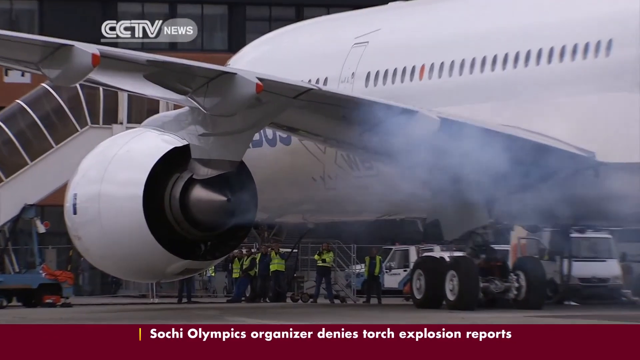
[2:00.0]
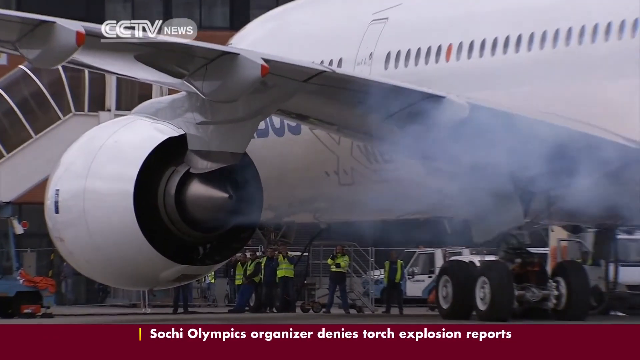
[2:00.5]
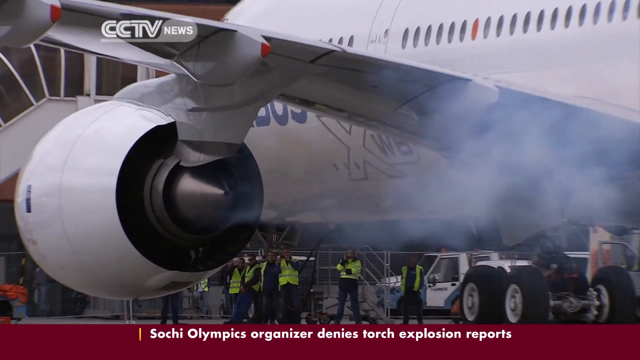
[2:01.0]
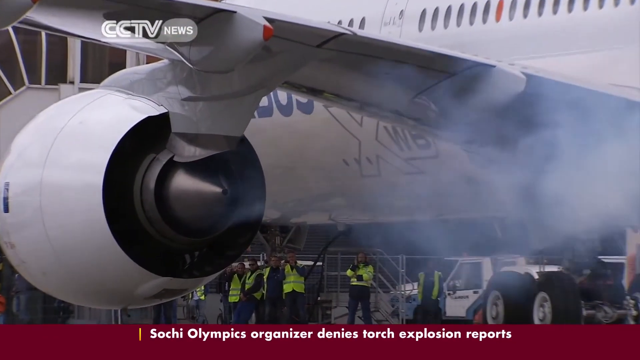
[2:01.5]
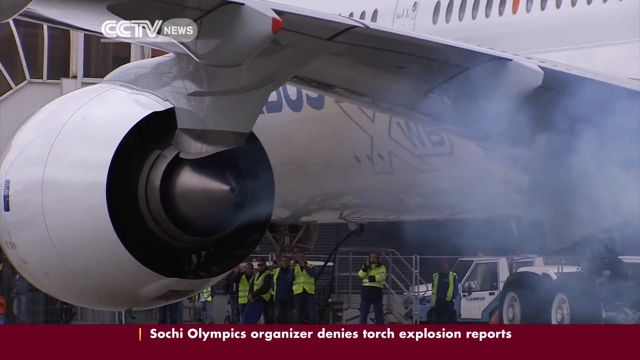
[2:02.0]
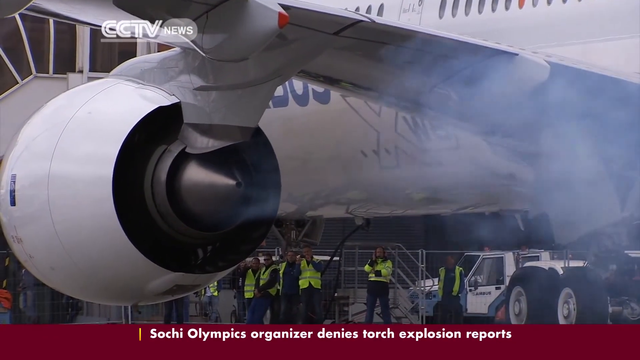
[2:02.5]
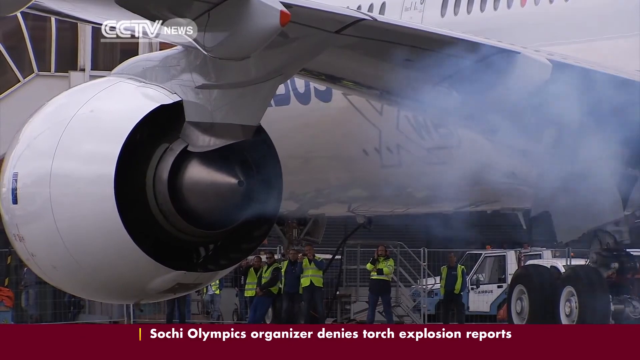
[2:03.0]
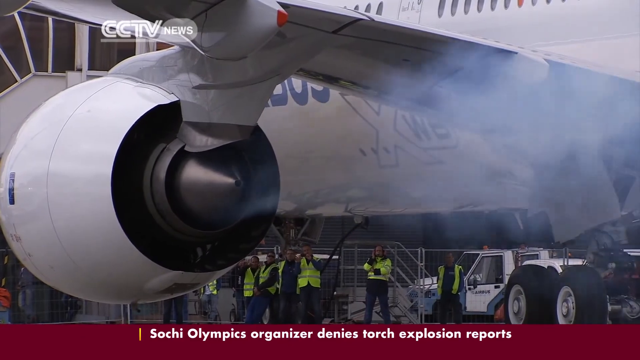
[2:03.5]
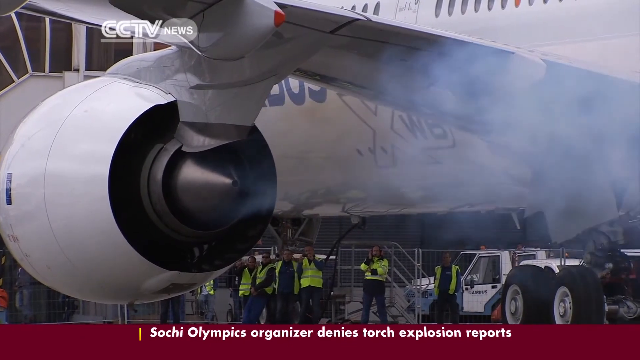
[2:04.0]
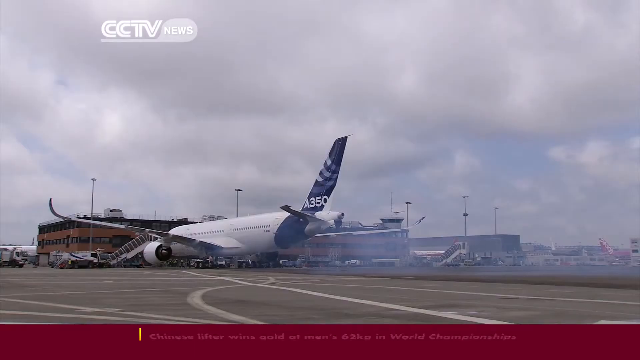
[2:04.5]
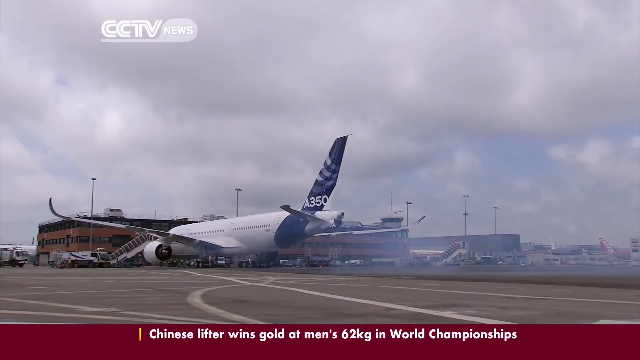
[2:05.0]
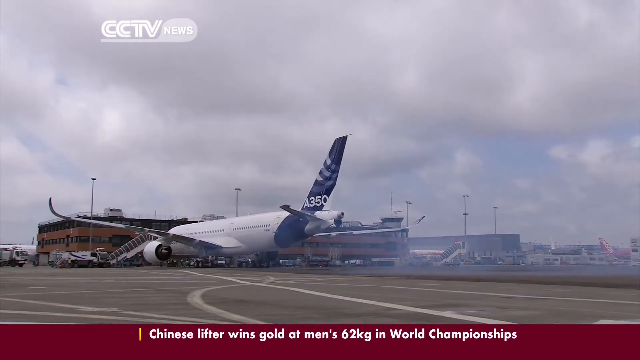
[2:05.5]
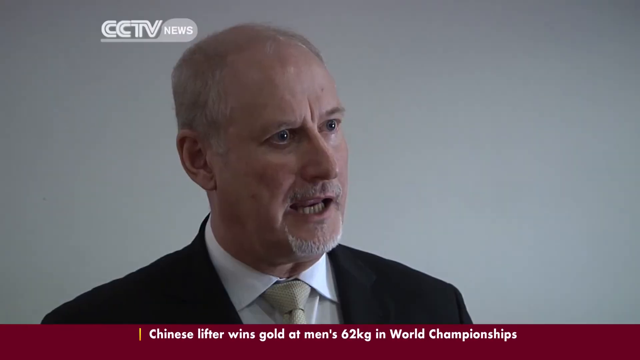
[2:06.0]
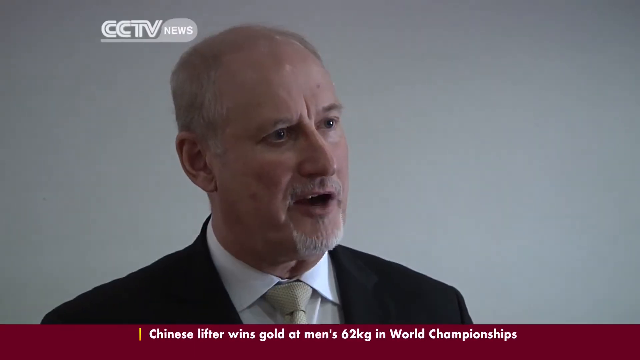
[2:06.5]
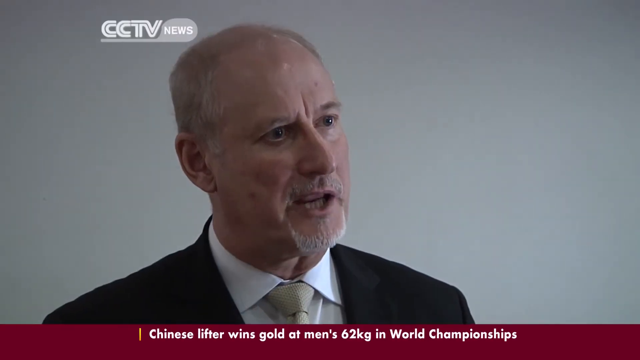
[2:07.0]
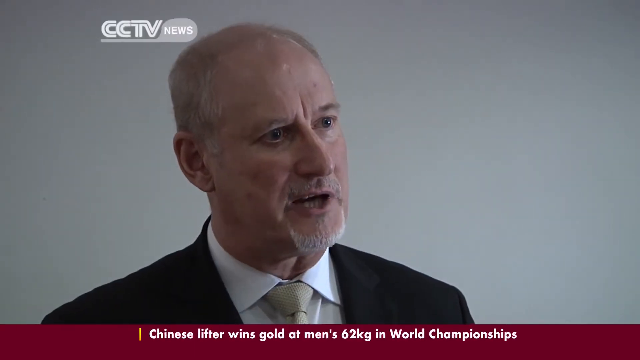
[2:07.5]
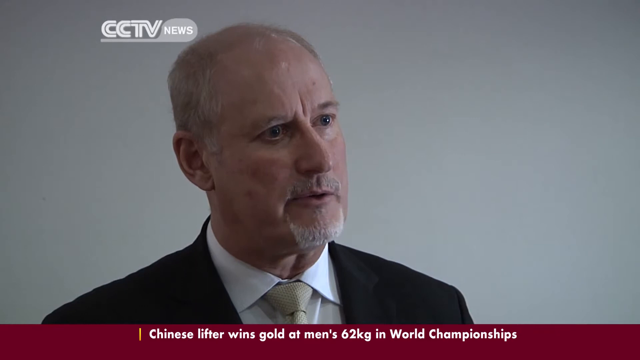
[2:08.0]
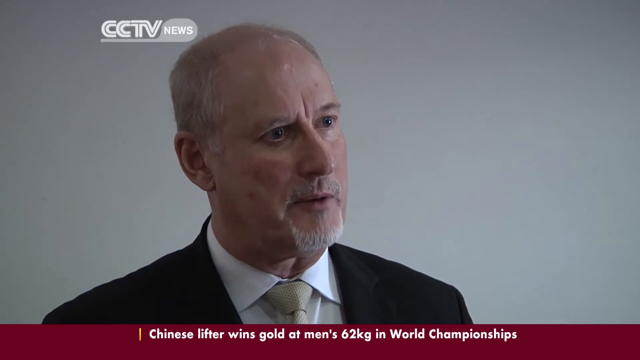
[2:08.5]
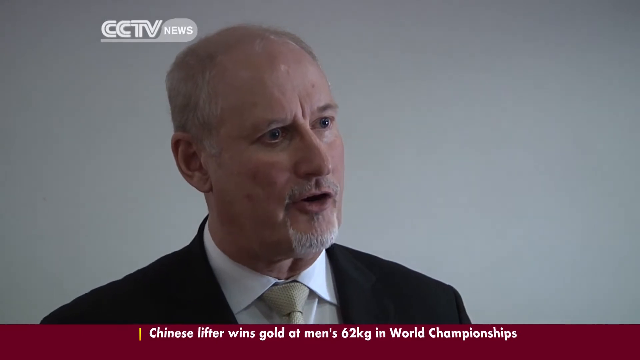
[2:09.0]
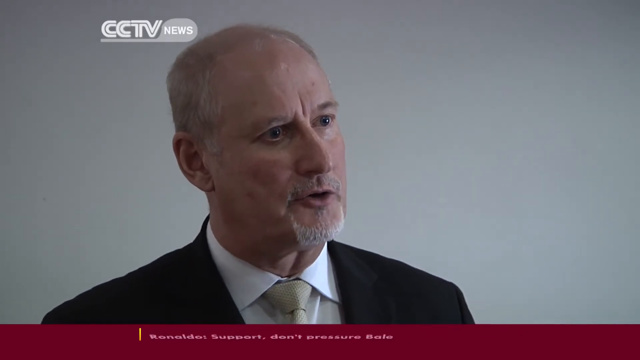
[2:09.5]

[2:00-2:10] Smoke continues to come out of the one engine. Probably about 10 people in reflective neon green jackets are there with a small vehicle, just watching the smoke. The terminal is in the background, along with the covered, all-glass ramp with stairs that slides up to the airplane door for boarding and exiting. The smoke fills the air, making parts of the background hard to see, but some white vehicles are parked by it. The engine is huge.